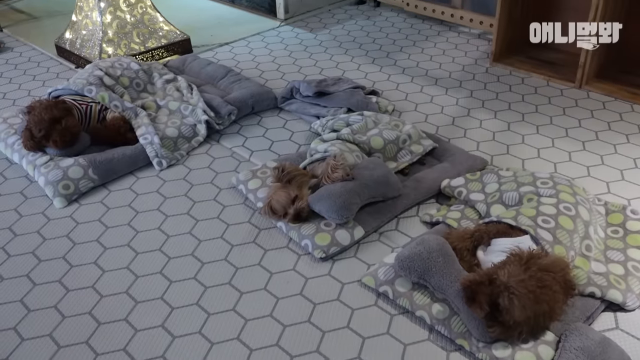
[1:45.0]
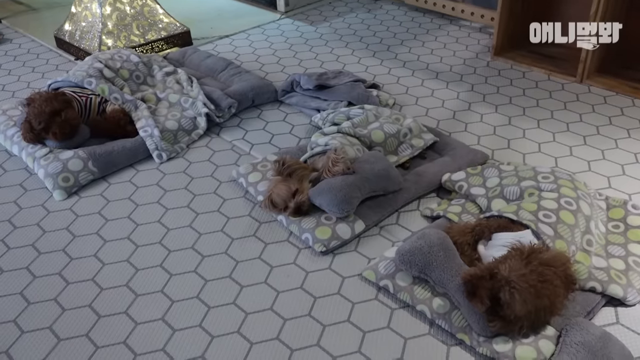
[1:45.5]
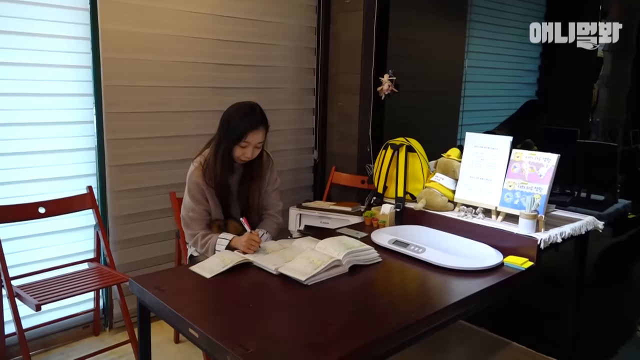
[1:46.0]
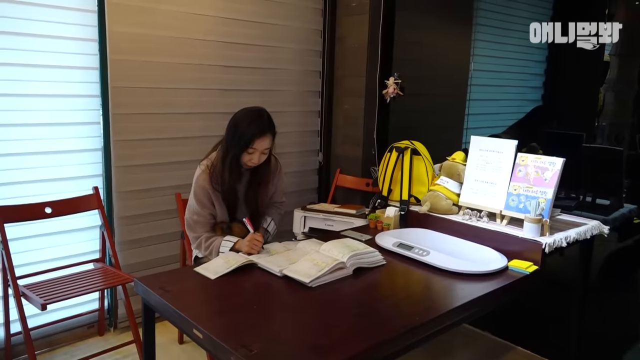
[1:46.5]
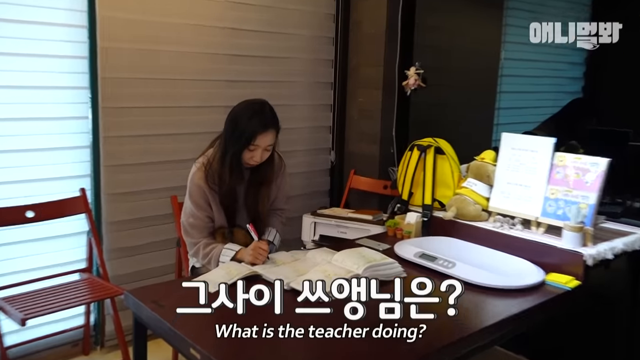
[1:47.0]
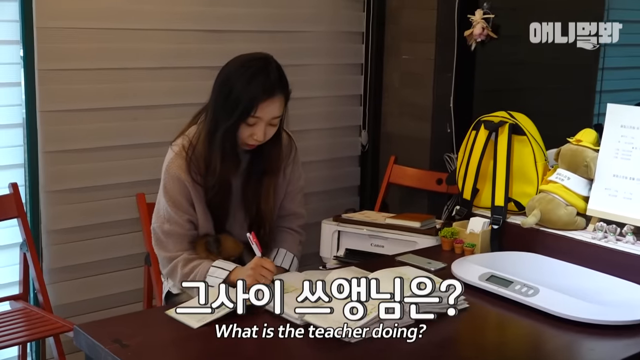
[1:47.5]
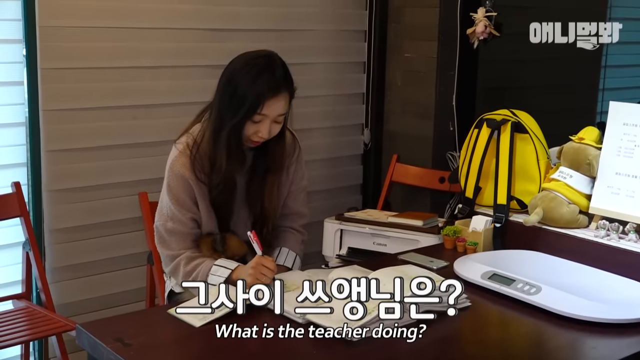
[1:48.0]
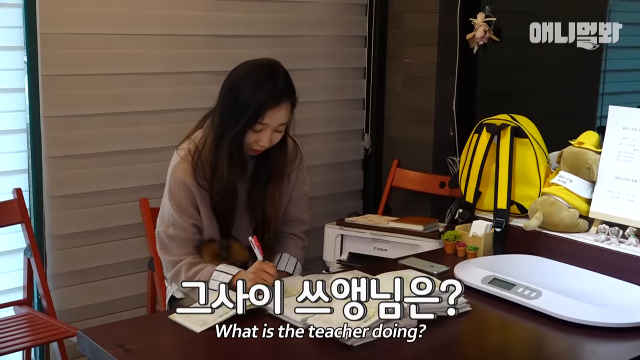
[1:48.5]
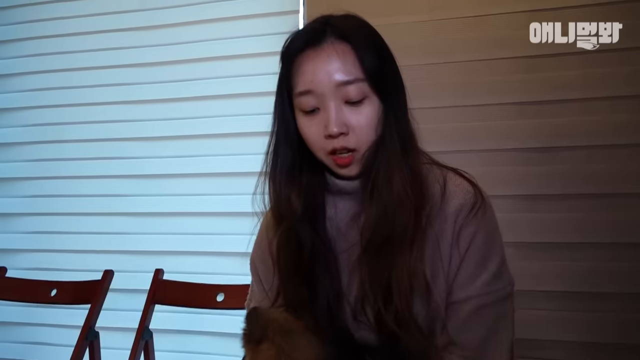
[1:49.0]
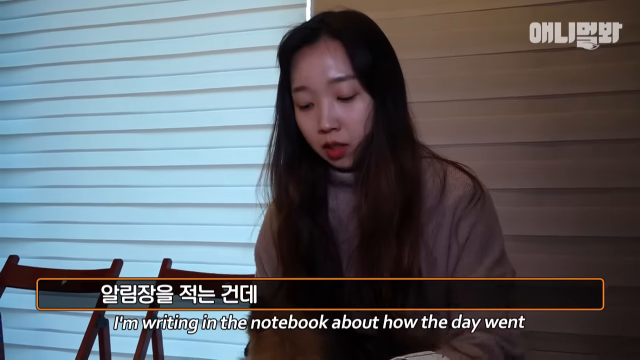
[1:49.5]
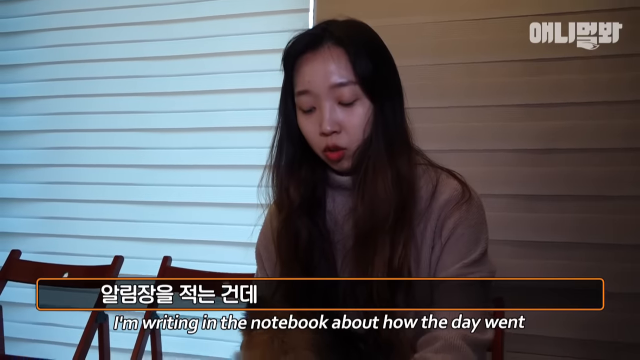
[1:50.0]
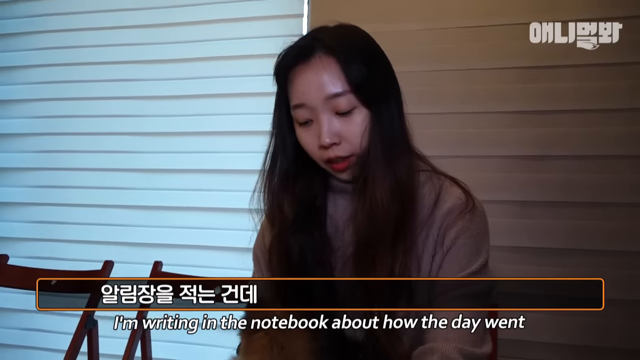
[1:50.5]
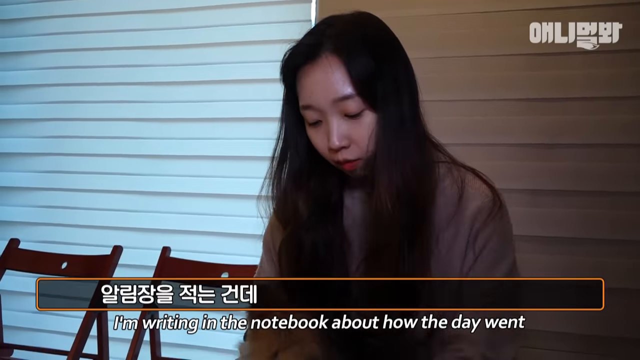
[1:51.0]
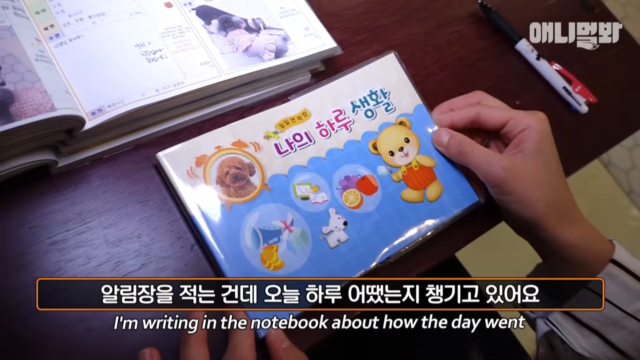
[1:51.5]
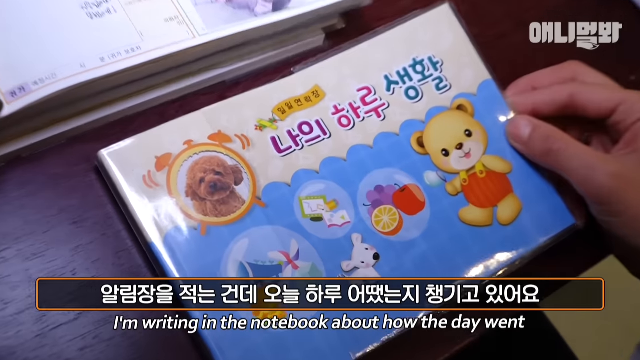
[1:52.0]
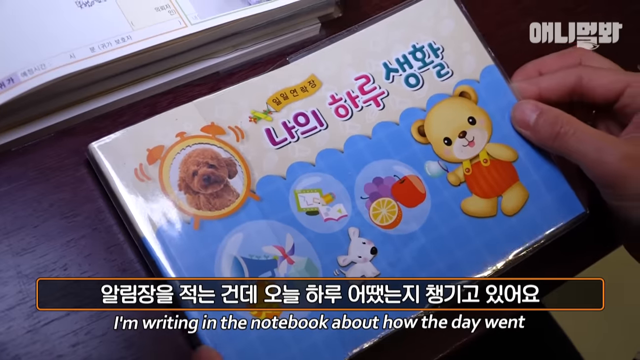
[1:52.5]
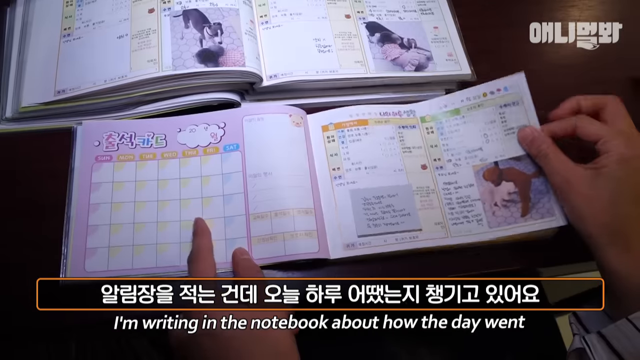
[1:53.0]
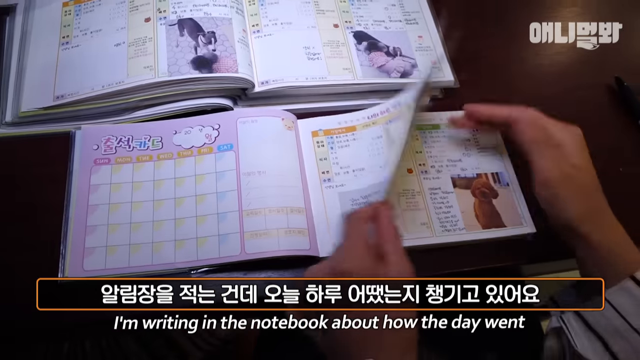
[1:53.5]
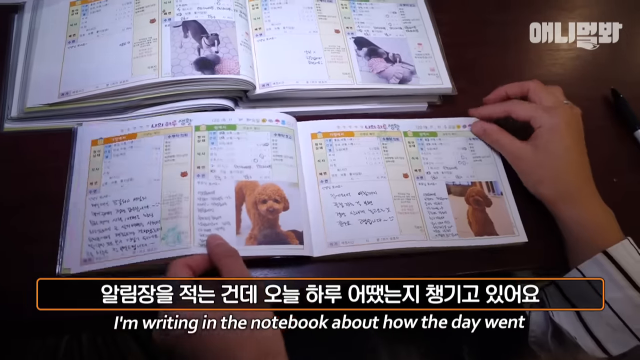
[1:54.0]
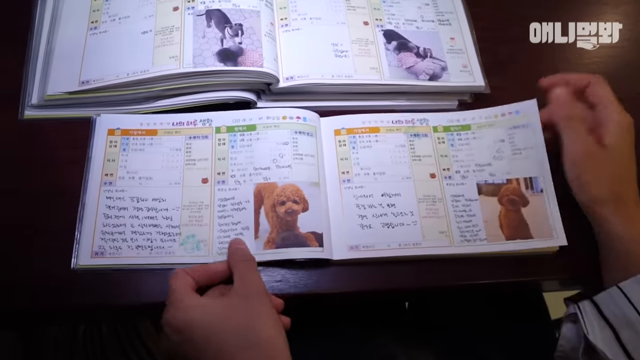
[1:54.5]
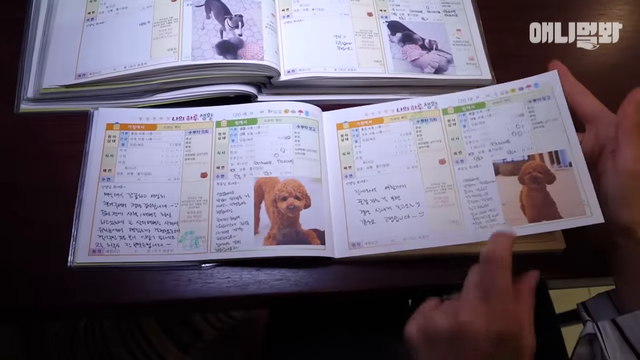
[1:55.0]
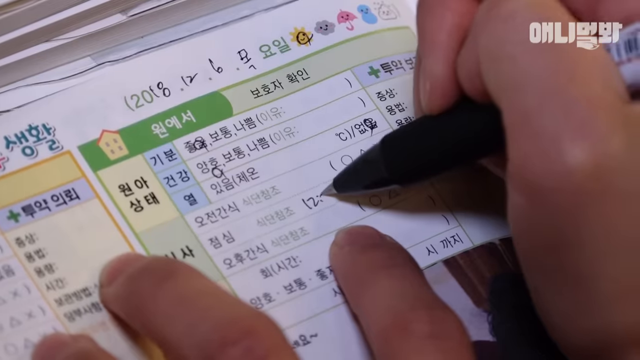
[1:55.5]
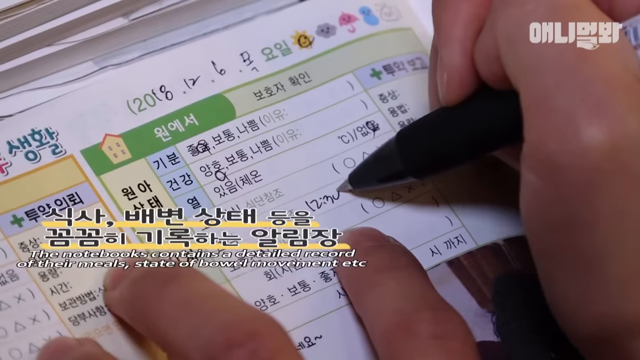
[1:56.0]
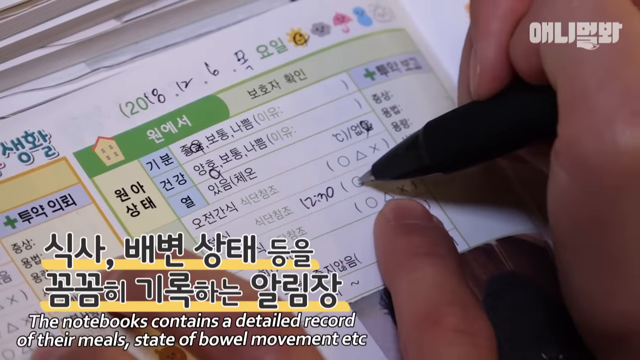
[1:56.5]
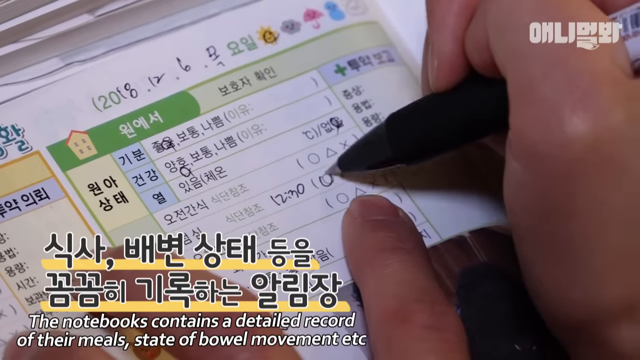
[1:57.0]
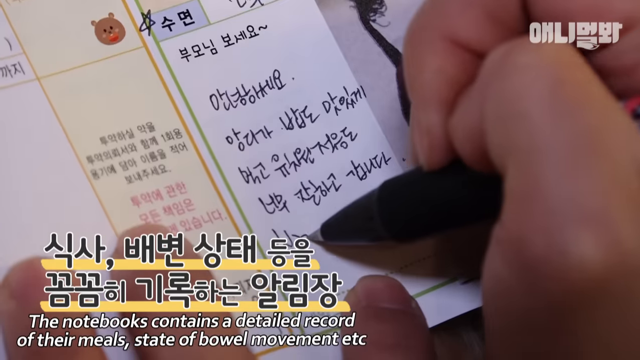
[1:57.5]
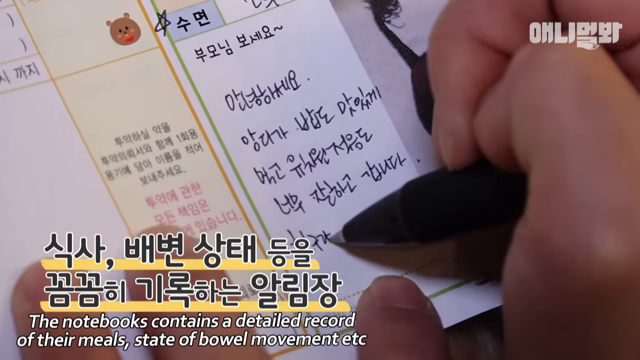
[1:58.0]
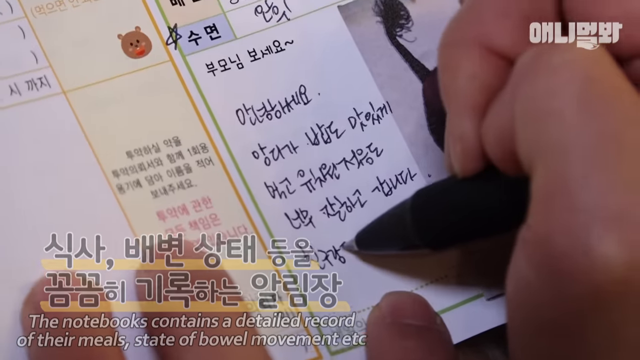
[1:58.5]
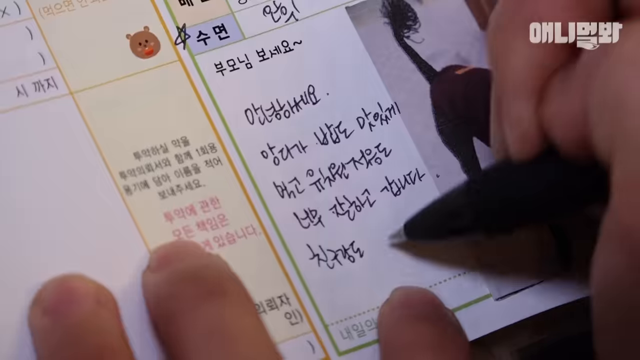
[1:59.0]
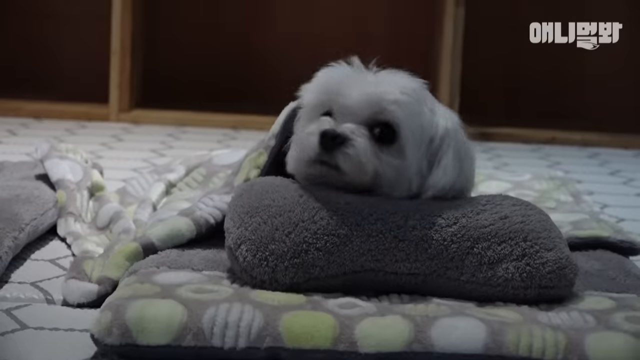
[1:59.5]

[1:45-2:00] The dogs are asleep, and a woman writes at a desk with a brown dog in her lap. The caption says "I'm writing in the notebook about how the day went." The notebook has pictures of the dogs, calendars, and sections of text in some language, possibly Korean, with lots of words, times, dates and all kinds of information written in it. A fluffy white dog with big black eyes lies in bed looking up; the gray bed is very fuzzy and has its own matching pillow and a blanket with green and gray dots.